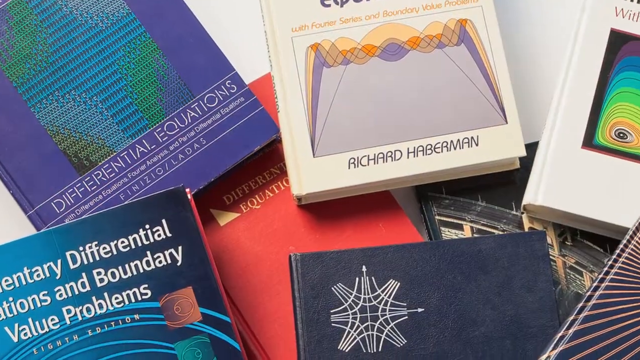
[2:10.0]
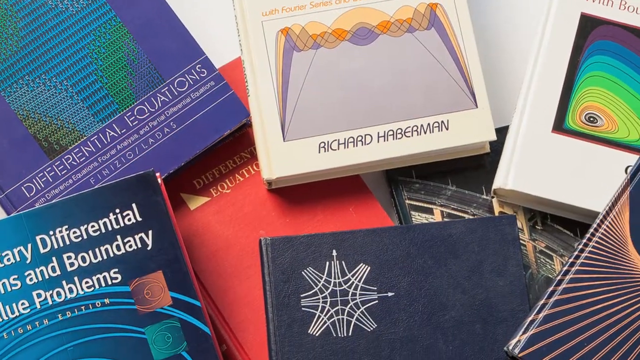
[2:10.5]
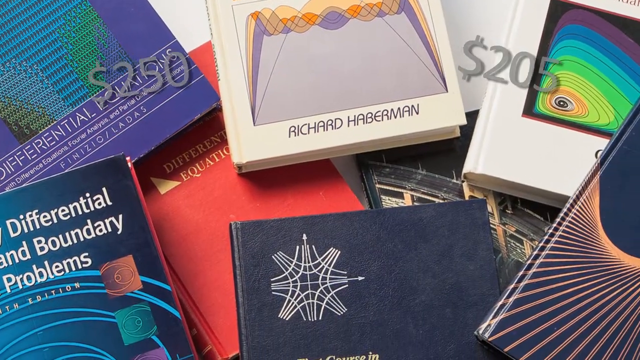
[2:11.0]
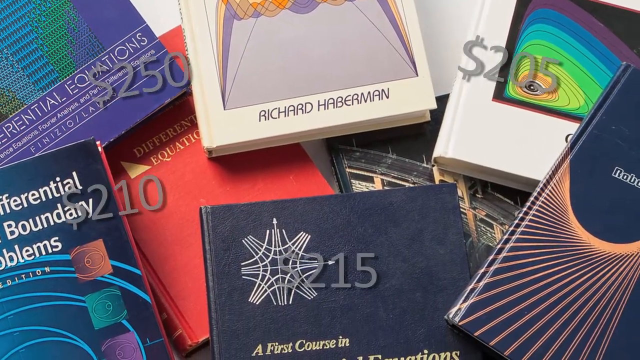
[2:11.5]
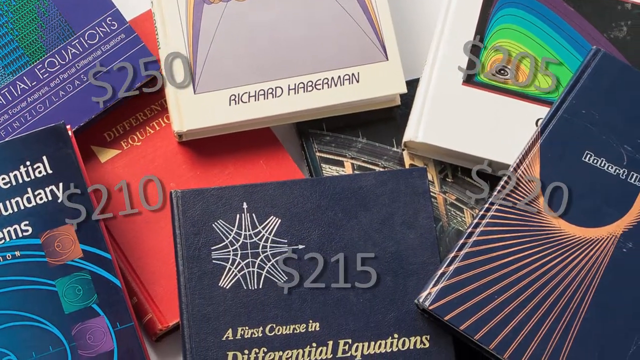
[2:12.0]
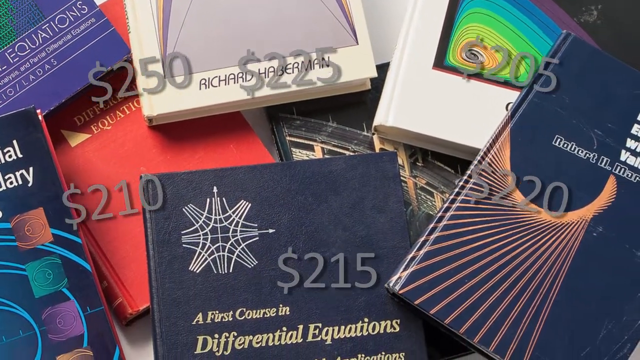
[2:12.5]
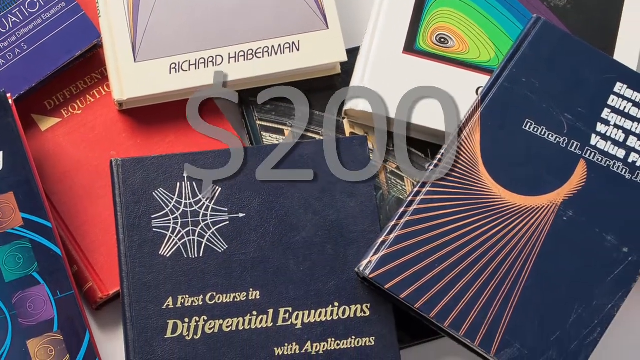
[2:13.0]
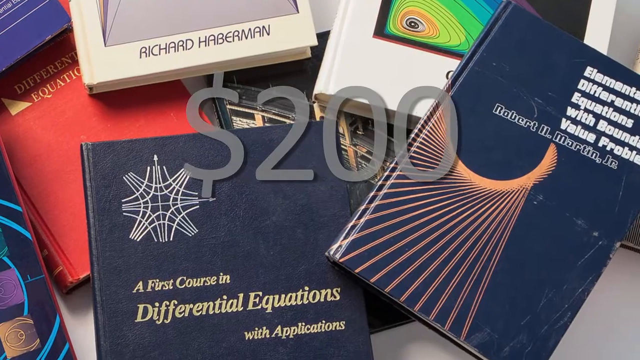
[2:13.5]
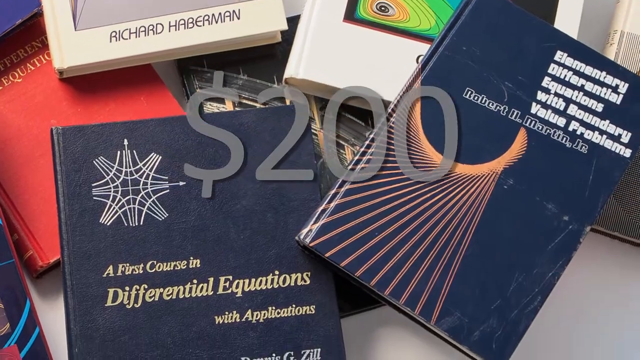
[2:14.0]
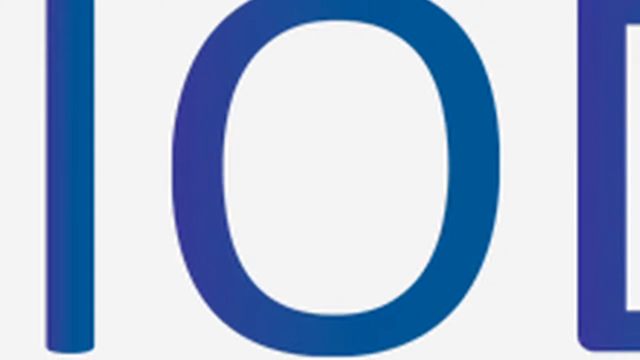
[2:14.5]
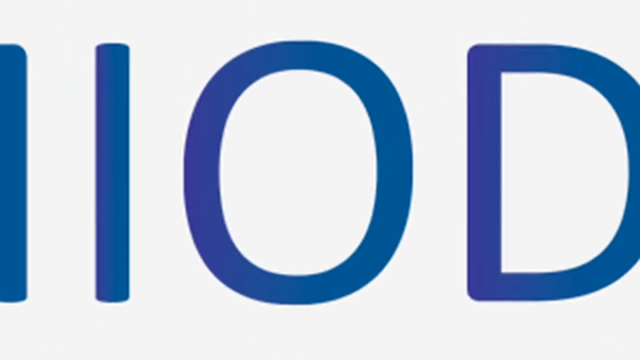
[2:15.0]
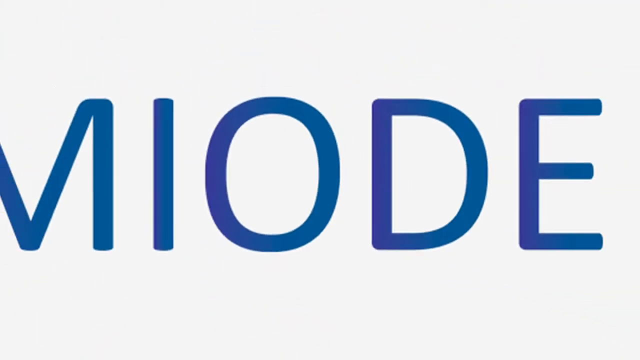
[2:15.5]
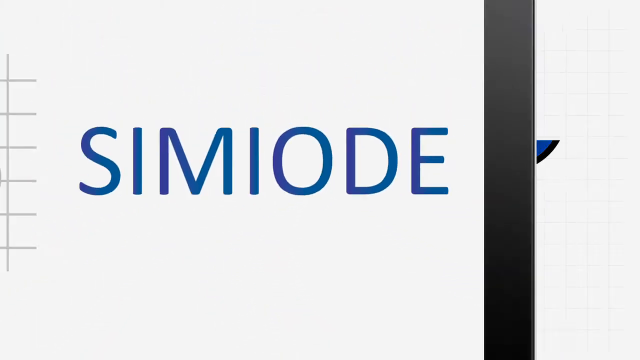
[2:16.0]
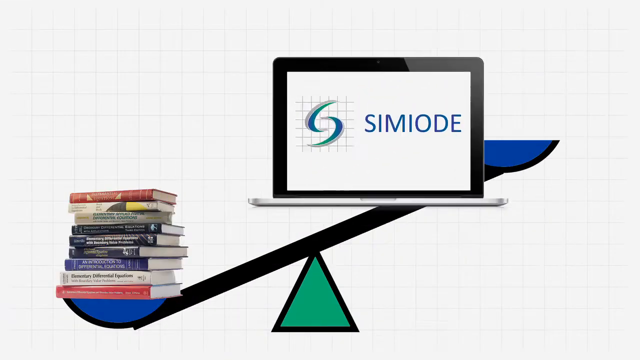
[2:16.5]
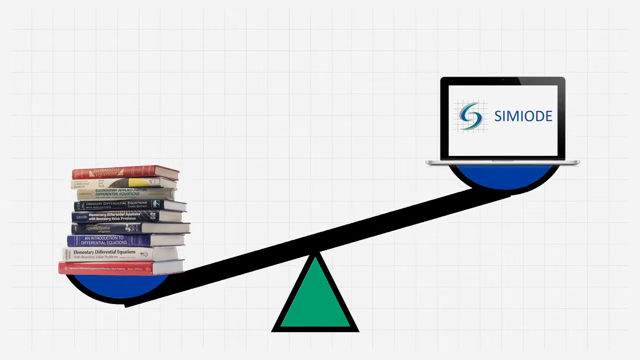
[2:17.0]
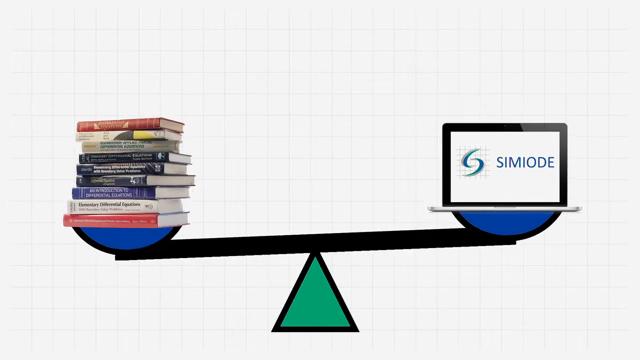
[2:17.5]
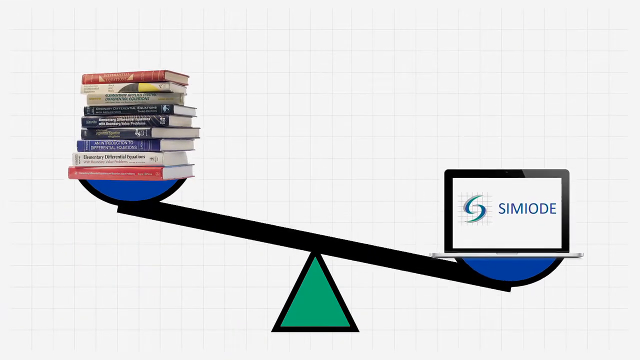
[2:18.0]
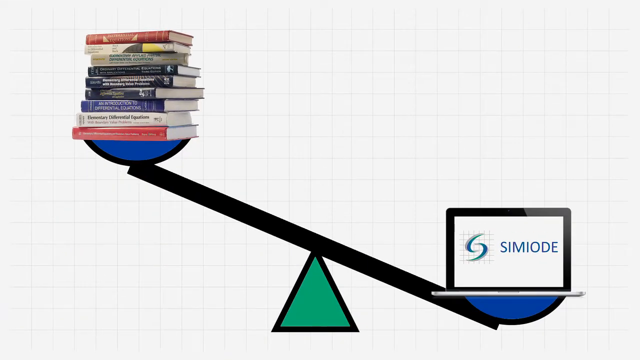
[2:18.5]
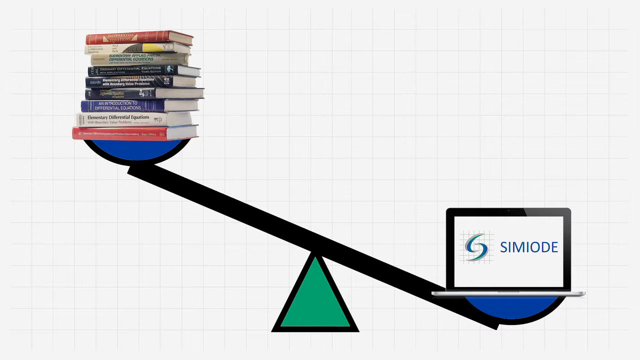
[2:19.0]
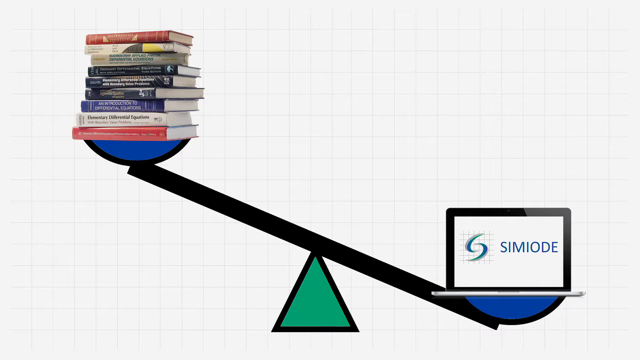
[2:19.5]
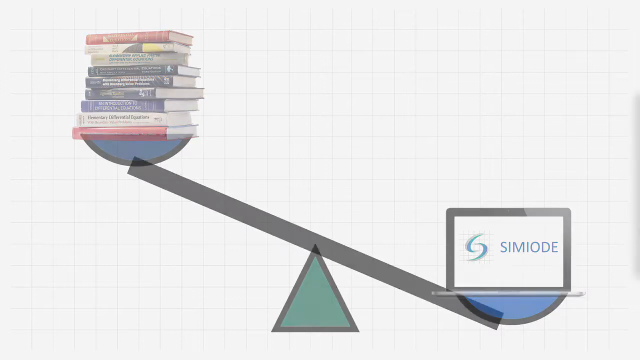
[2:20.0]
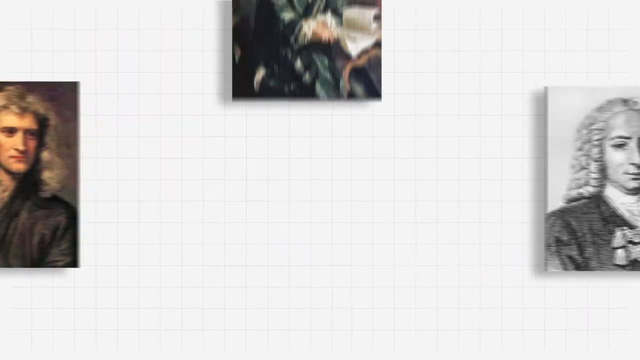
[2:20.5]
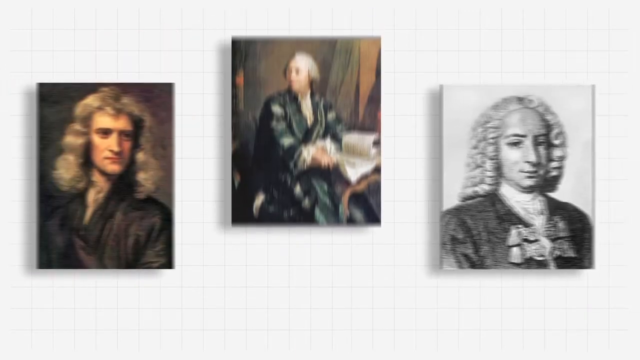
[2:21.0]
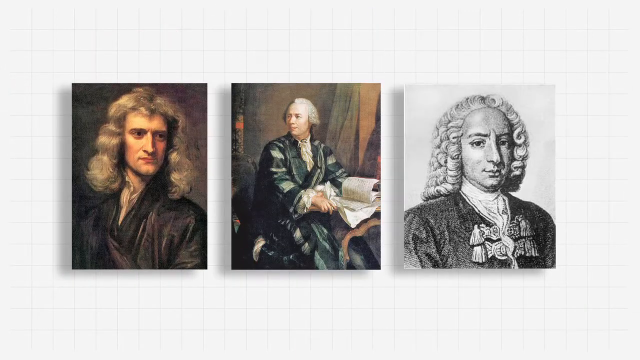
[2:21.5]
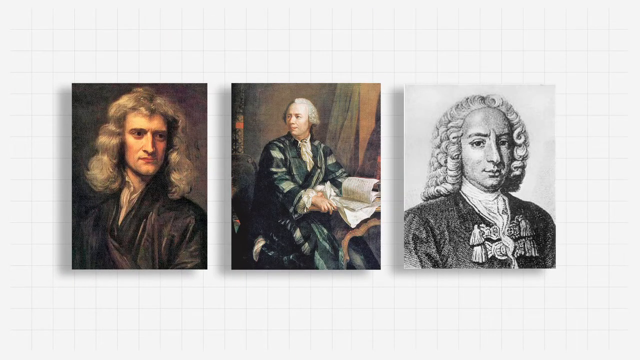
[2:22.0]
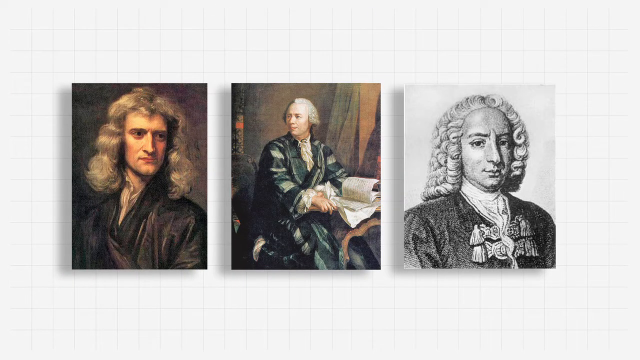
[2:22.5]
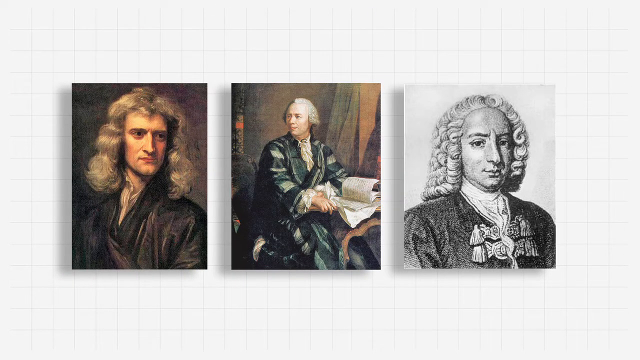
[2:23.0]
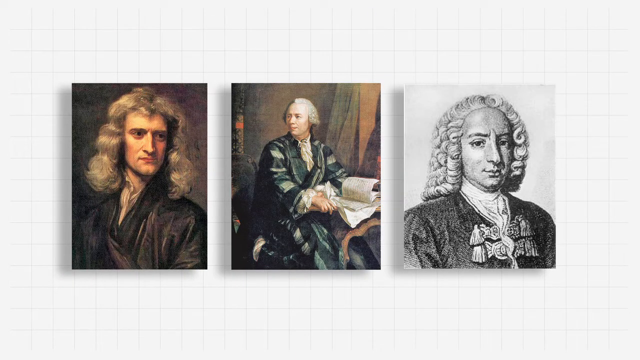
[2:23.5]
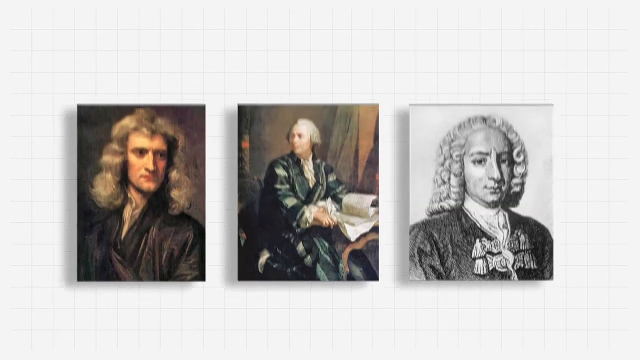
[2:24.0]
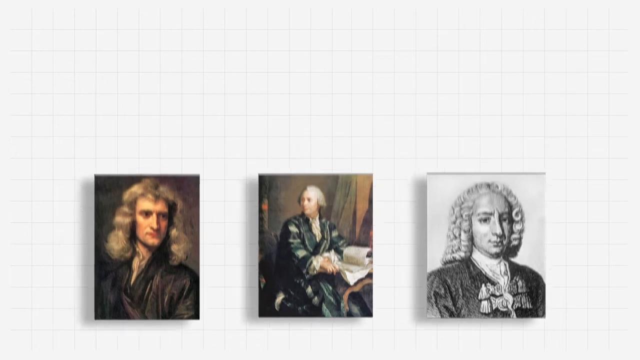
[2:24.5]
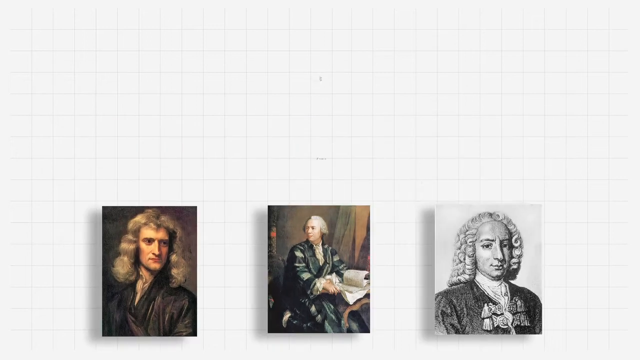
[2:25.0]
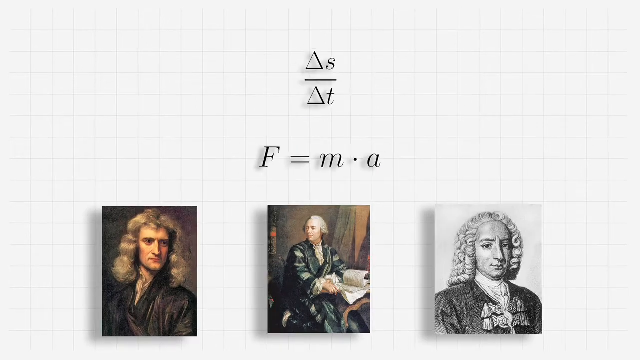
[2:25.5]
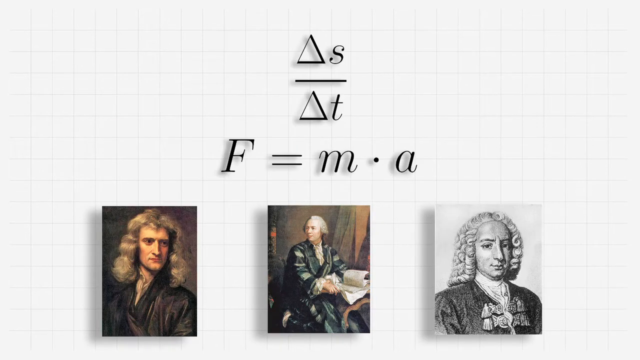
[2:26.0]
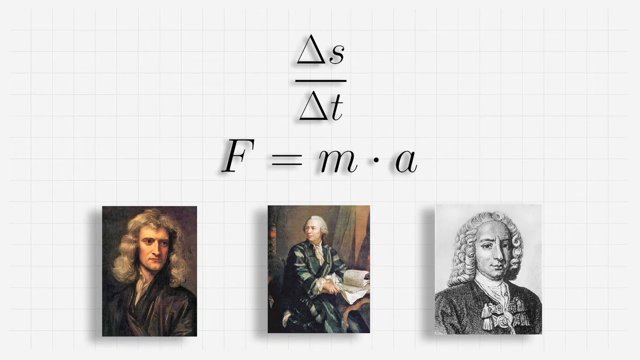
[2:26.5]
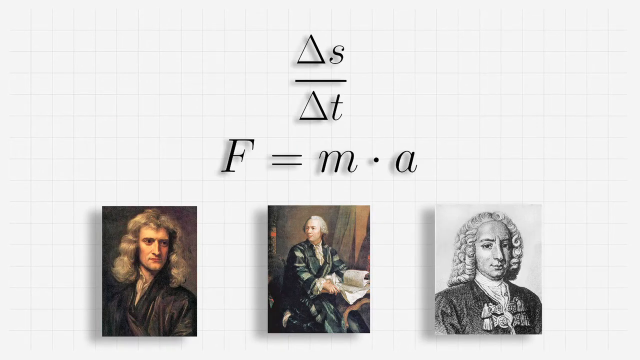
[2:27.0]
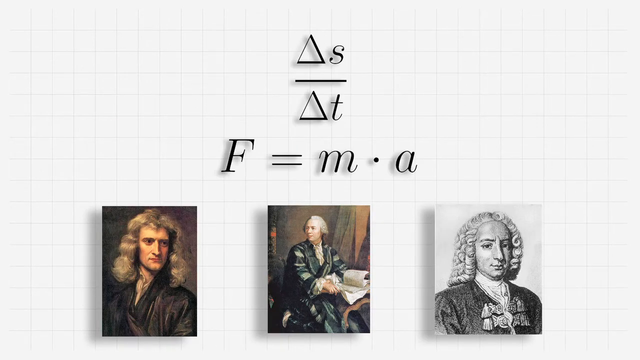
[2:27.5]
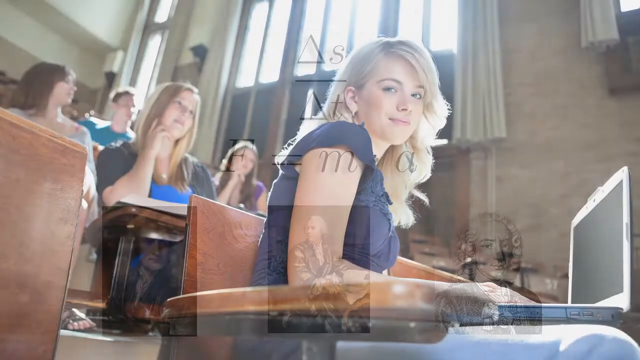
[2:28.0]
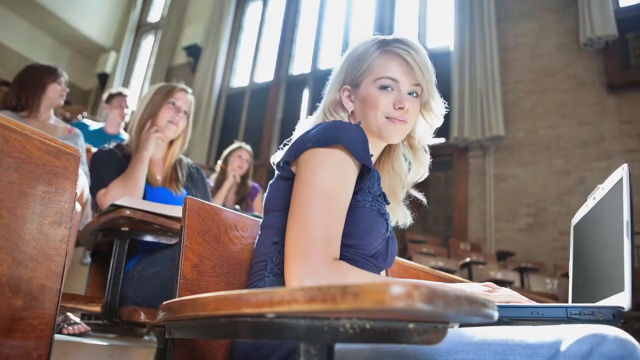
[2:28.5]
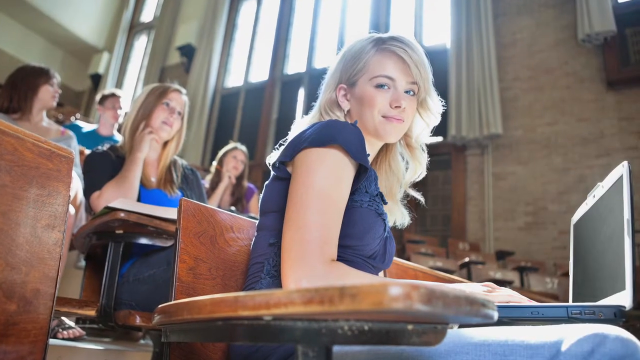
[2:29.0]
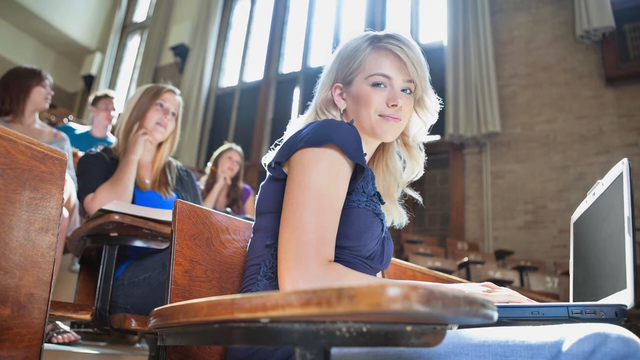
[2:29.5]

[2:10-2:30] A number of textbooks are laid out on the screen. On a kind of diagonal is the bottom of a book called "Differential Equations", with a grey "$250" superimposed toward the bottom right corner of its cover. Next to it is a white hardback with the name "Richard Haberman" along the bottom of the cover, just slightly up from the very bottom. Below and between the two is a red book cover with some lettering obscured, showing "Different Equation" with a yellow triangle to the left of those letters. A black hardback is under the Richard Haberman book. The books move toward the left side of the screen and disappear in the top left corner, while various dollar amounts, such as "$250", appear randomly across the screen. Next is a seesaw graphic: its base is a green triangle with a black border, the bar across is thick and black, and there is a blue seat on either side, each bordered on the bottom with a black arc. On the left side is the set of books, and on the right side is a screen featuring the SIMIODE logo. The seesaw goes up and down. Three portraits of historic figures from a past century follow: the one on the left has long hair of his own, and the other two appear to be wearing legal-type wigs. An equation appears above the portraits as they move down the screen slightly and separate to left, right and center. The scene then moves to an image of a young blonde girl in a classroom setting.